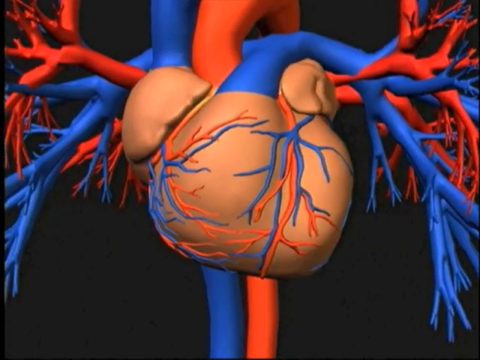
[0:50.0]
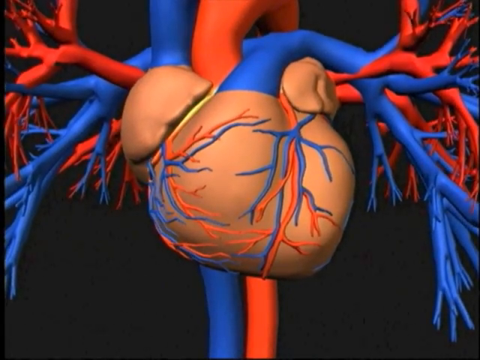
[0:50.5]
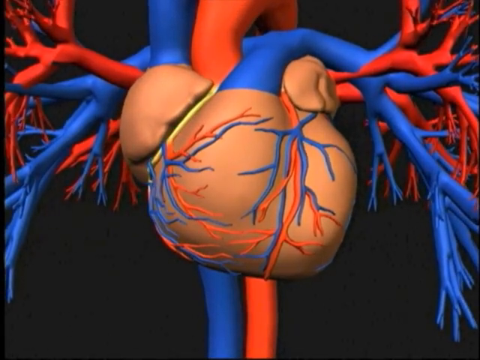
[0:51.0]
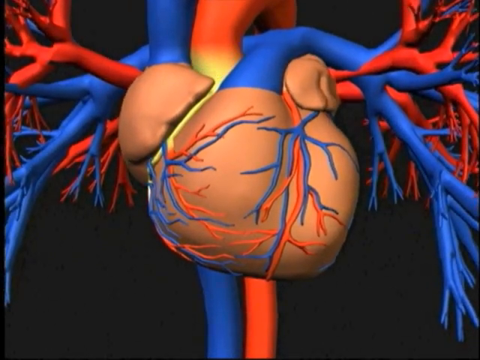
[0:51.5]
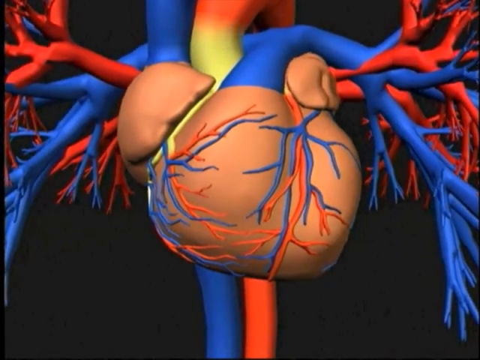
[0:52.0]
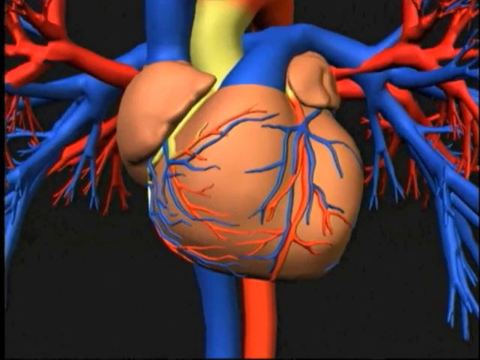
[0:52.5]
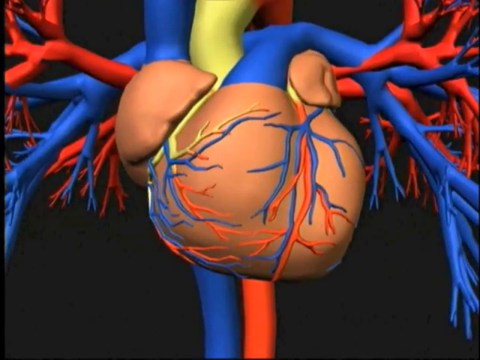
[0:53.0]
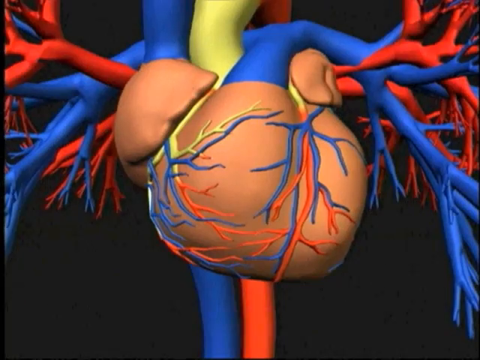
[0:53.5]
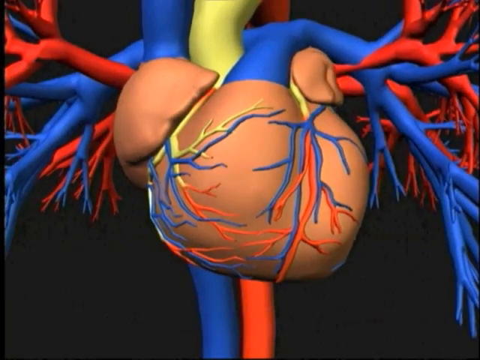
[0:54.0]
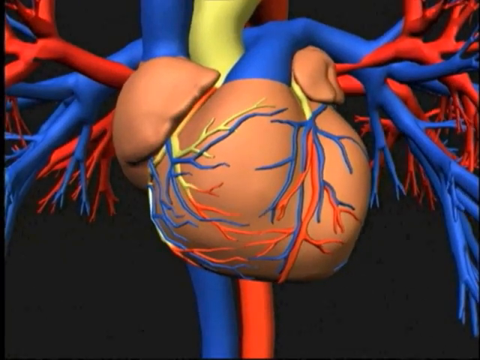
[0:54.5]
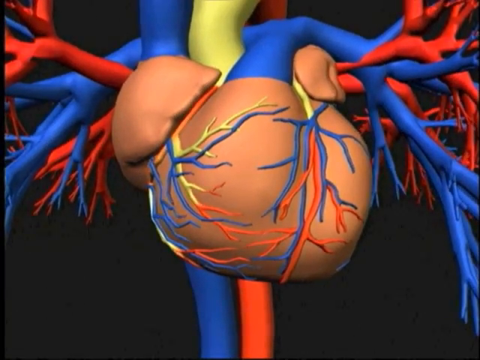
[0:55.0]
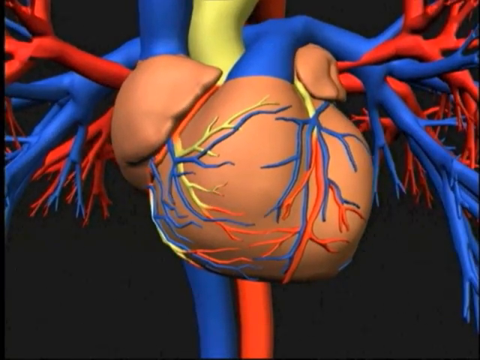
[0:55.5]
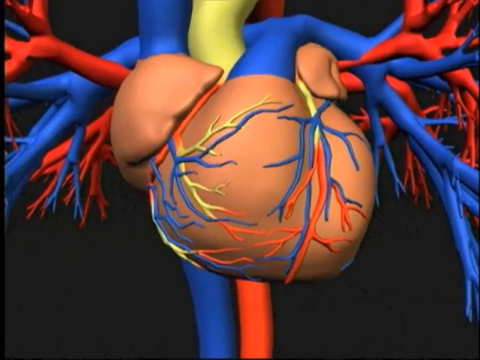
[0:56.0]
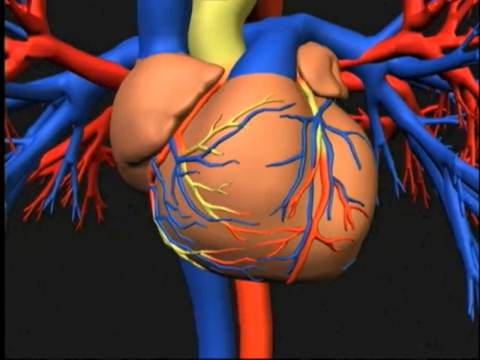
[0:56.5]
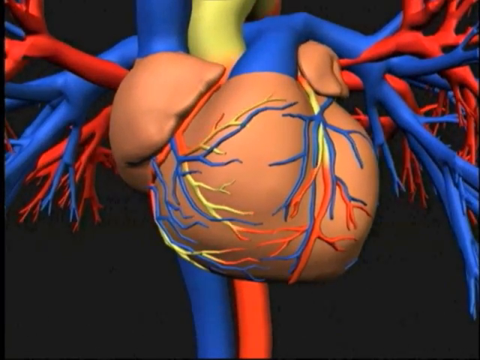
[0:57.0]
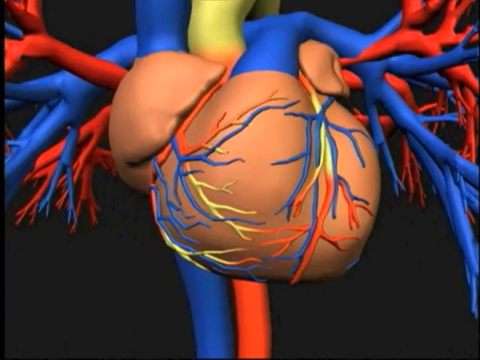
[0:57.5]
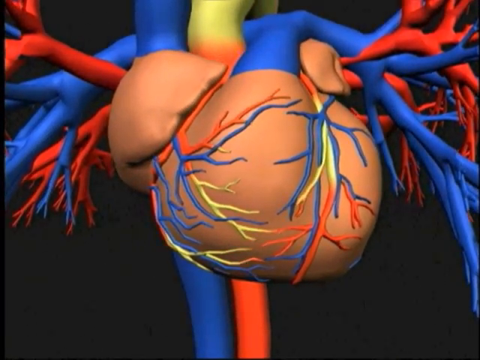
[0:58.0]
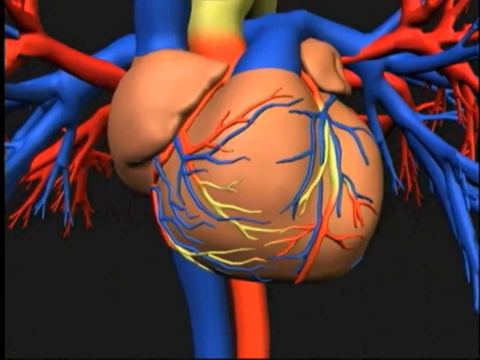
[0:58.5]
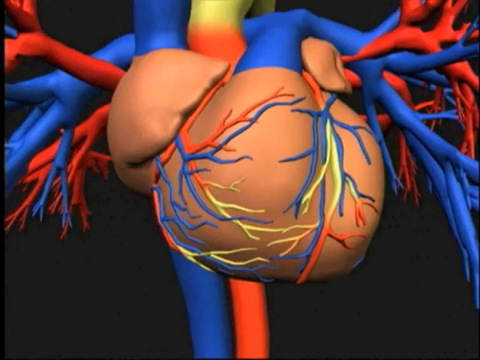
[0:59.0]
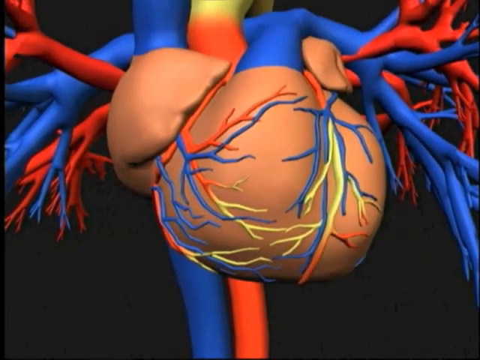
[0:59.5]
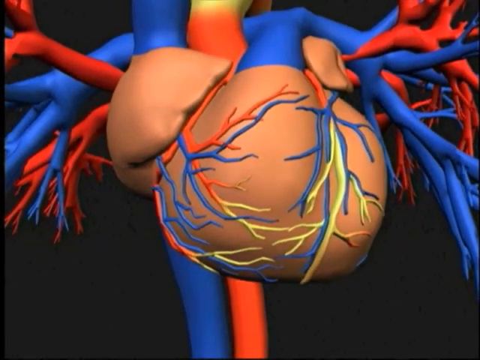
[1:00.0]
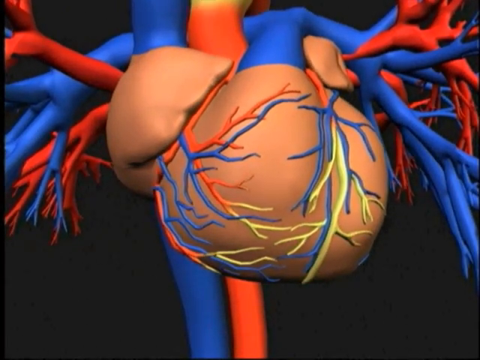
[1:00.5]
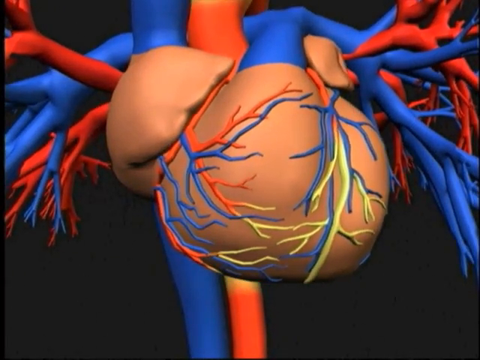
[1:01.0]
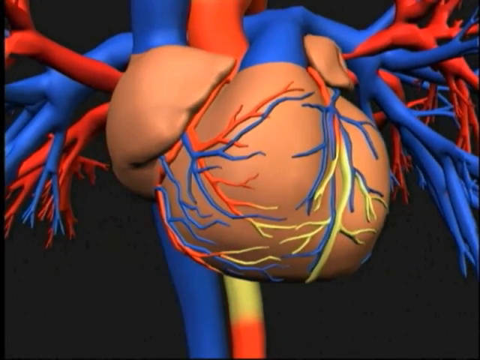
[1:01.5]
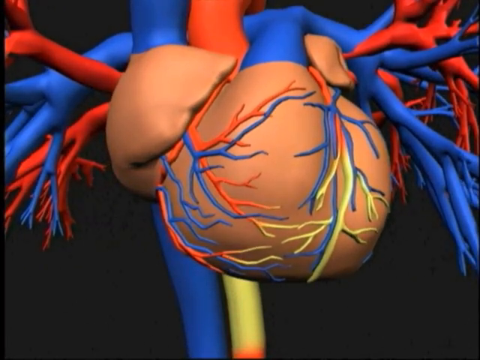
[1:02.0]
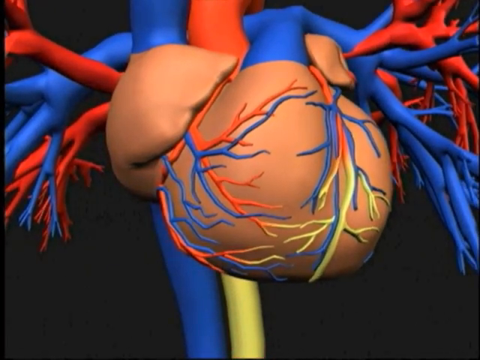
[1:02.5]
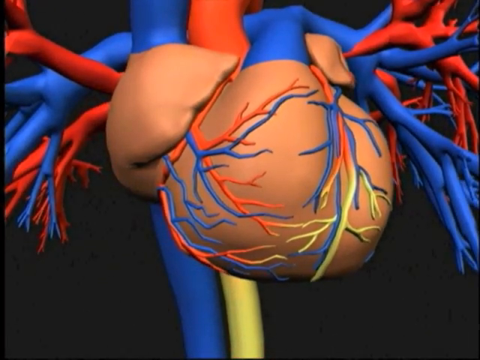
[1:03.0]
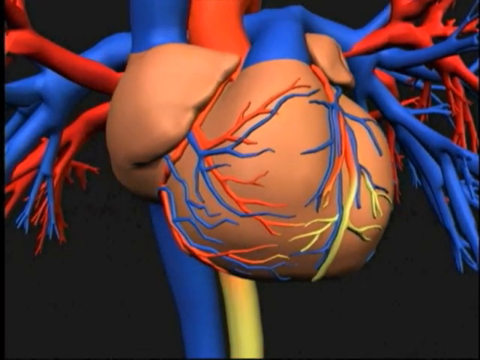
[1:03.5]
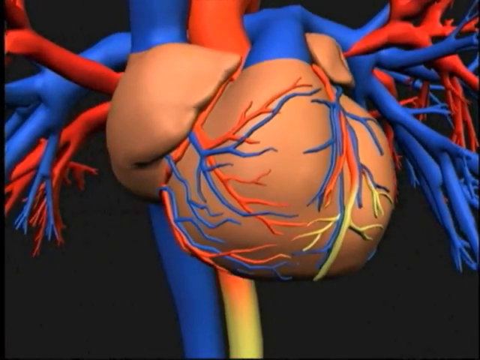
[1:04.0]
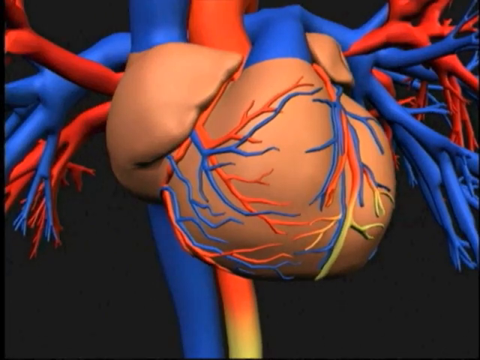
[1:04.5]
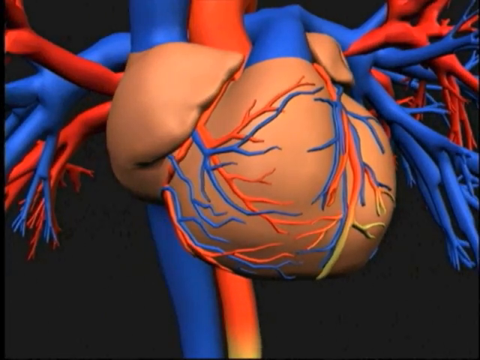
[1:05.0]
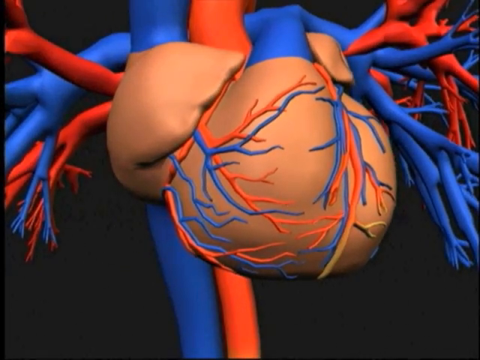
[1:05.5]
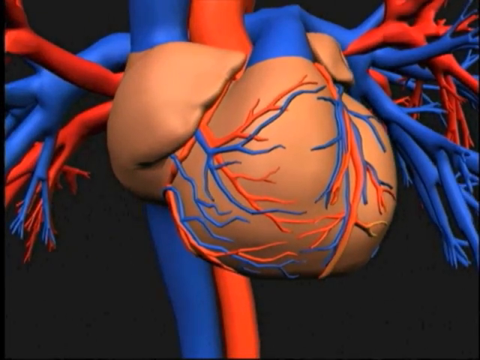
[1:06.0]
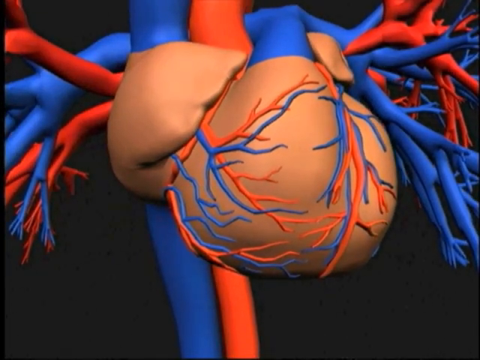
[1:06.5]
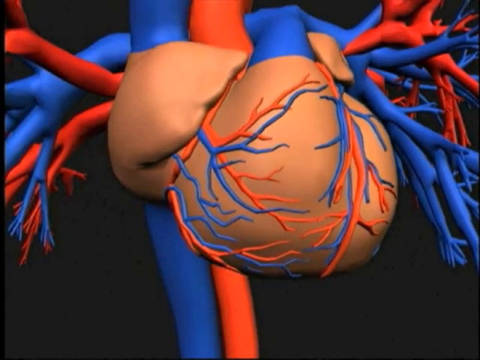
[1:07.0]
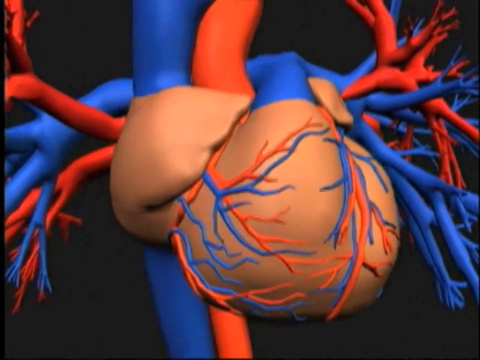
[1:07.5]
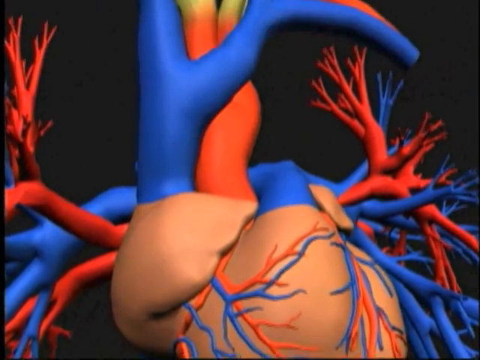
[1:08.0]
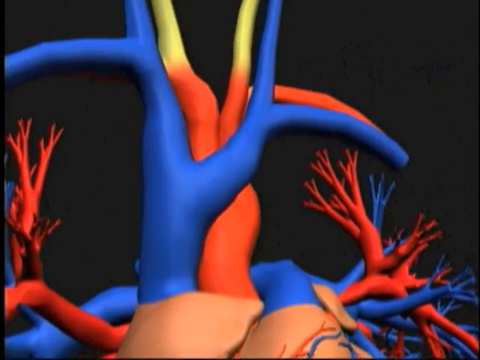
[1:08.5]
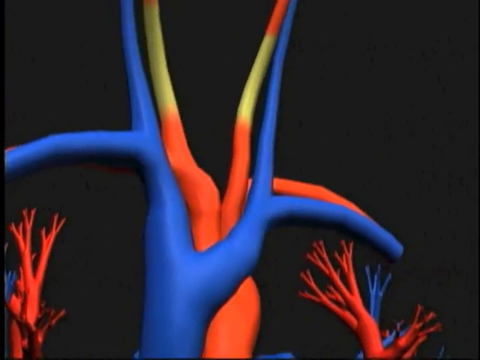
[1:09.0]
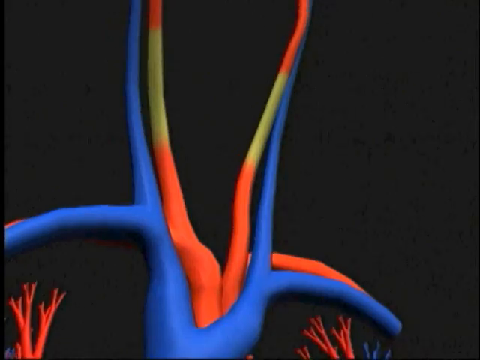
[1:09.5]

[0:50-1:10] The heart appears again, this time in full view, with its vascularity visible: blue veins and red veins. The camera zooms in on the heart slowly. The veins begin turning yellow, starting from the left side and then the red vein in the center, and the yellow gradually takes over every red line in the heart. Eventually the yellow fades and the heart returns to its normal colors. The view then zooms and pans upward, showing yellow filling some sort of receptors that may connect to the brain; the brain apparently appears as the shot ends.